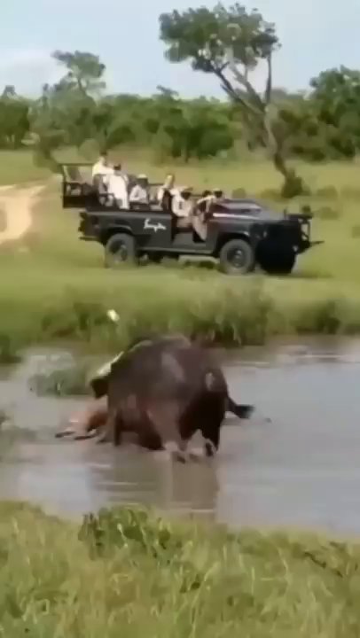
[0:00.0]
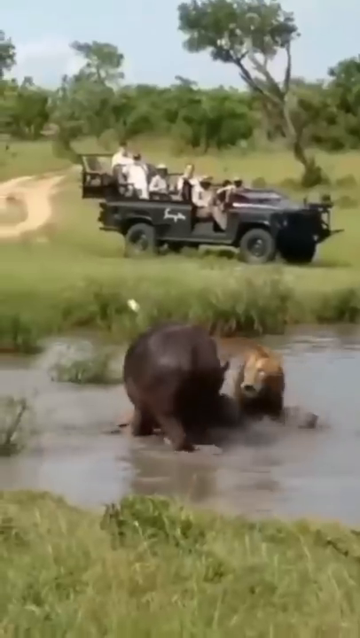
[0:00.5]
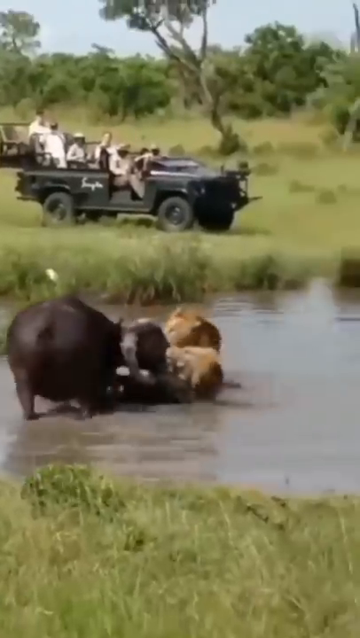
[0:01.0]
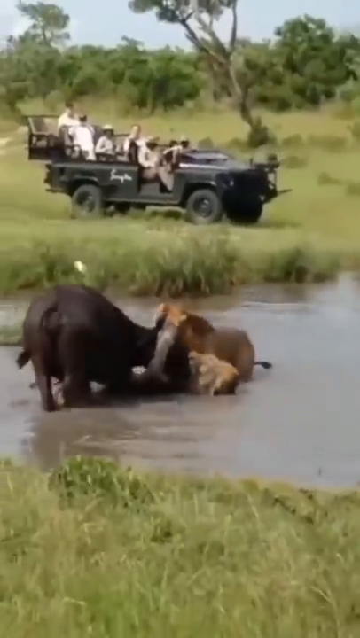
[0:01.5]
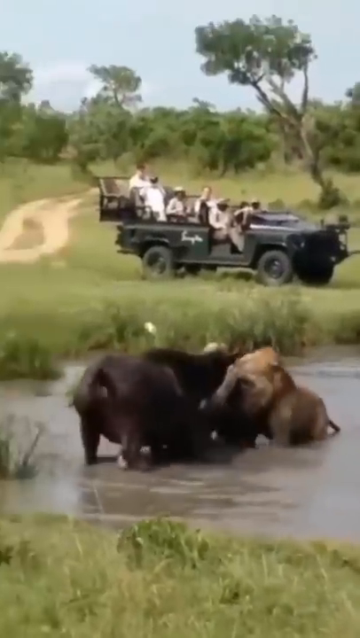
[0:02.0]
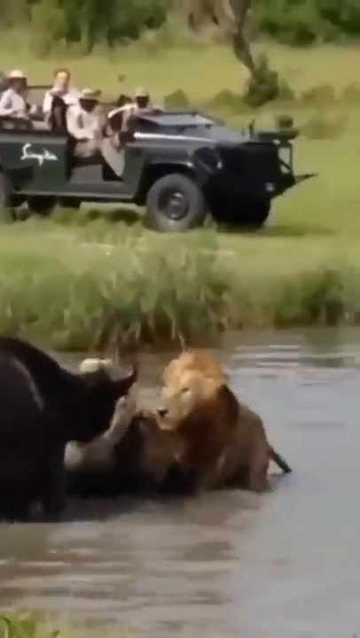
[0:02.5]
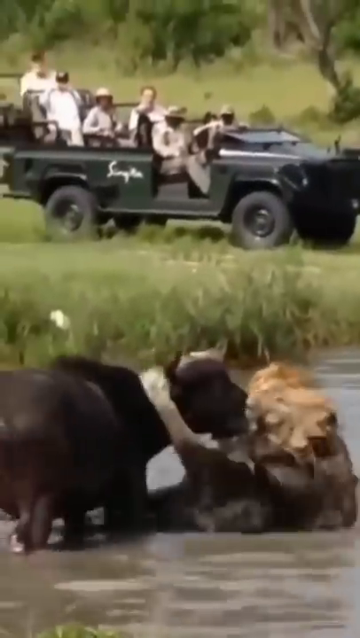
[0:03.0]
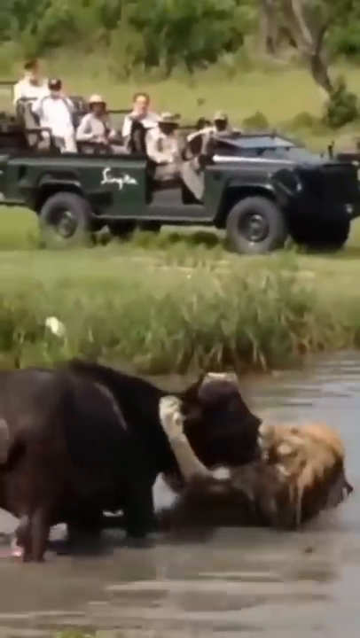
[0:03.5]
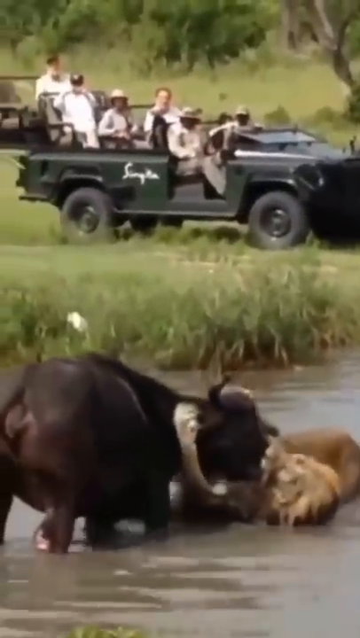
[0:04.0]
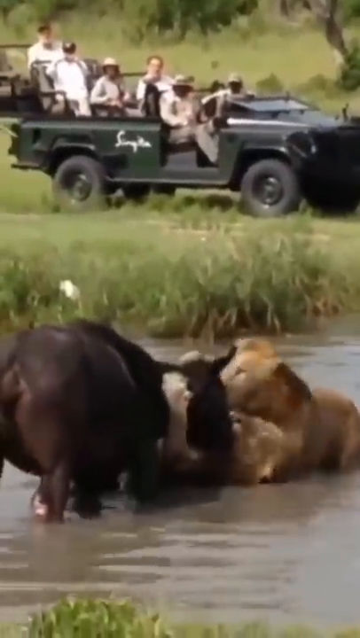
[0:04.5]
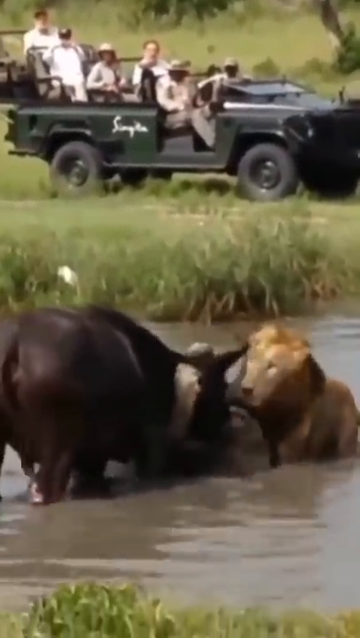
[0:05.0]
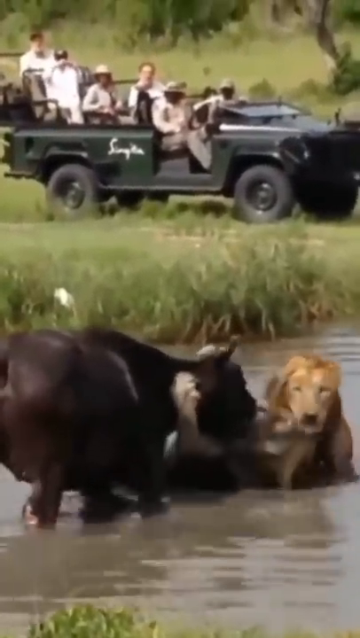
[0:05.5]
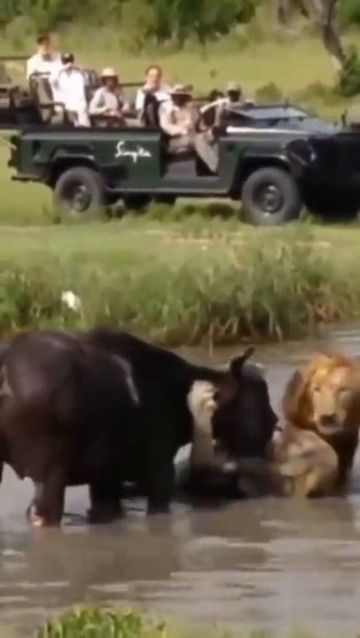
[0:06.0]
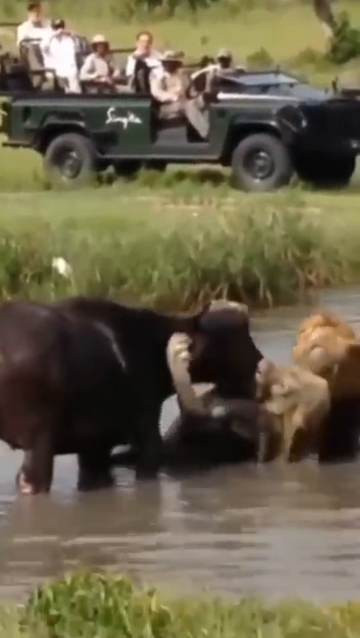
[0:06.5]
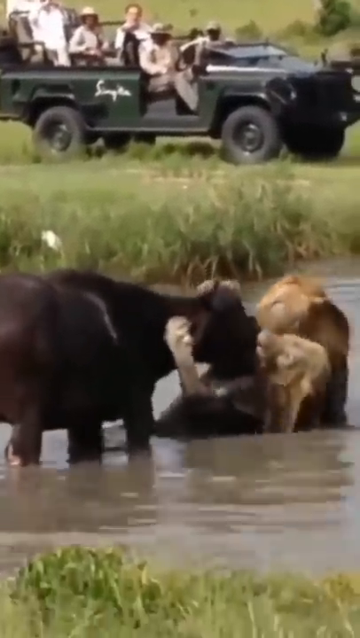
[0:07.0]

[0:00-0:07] Apparently two lions are trying to eat a wildebeest, and they have it in the water. In the background there seem to be some people on a safari, on a Jeep, watching everything; the person recording is probably on a Jeep as well, on the other side. One lion has bitten down on the wildebeest's face with its paws around its neck, trying to bring it down, while the other lion does more or less nothing, apparently waiting nearby. The wildebeest fights back and seems unable to be brought down in the water, trying to escape. Its horns appear unable to help it, as the lion has a good hold of its head and neck, and it cannot do much. In the water the wildebeest cannot move, and neither can the lions. The people in the Jeep watch and record.